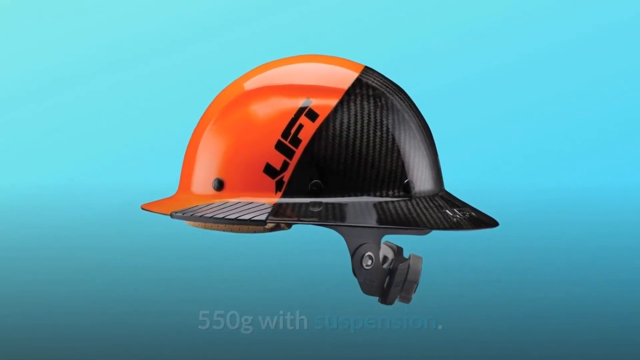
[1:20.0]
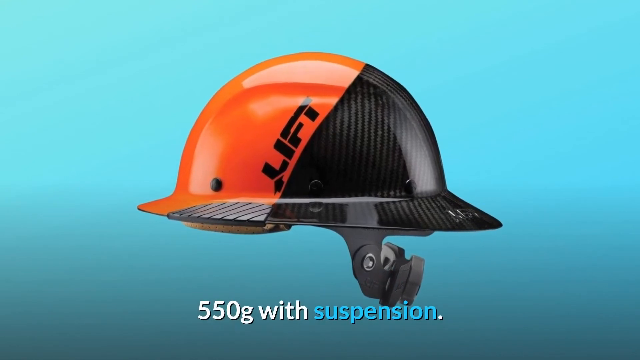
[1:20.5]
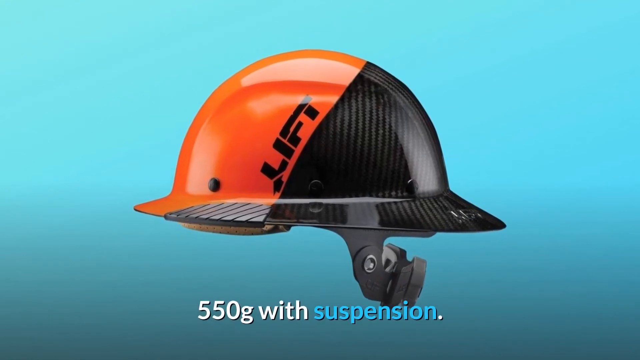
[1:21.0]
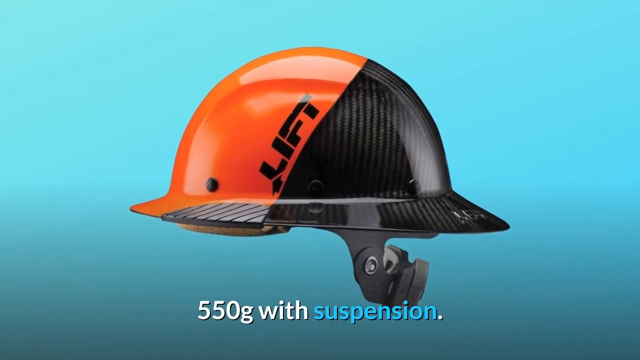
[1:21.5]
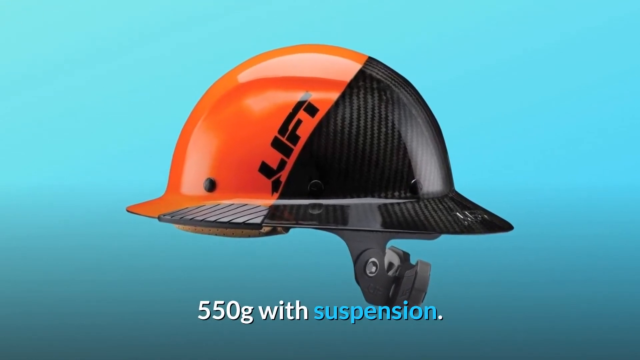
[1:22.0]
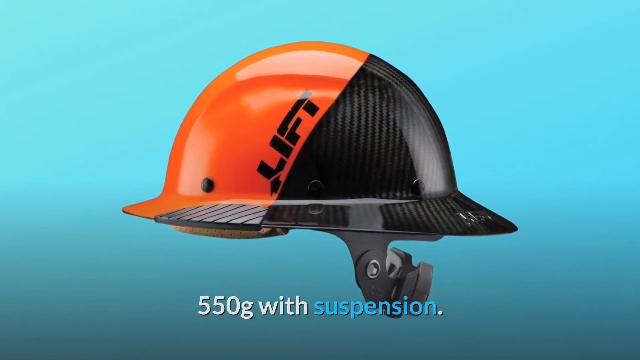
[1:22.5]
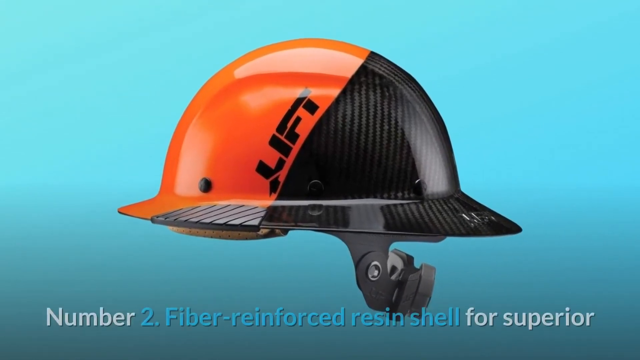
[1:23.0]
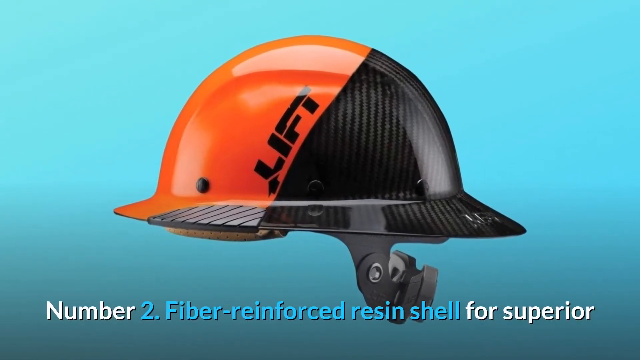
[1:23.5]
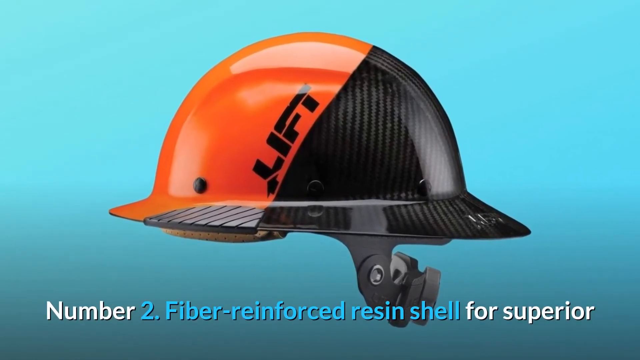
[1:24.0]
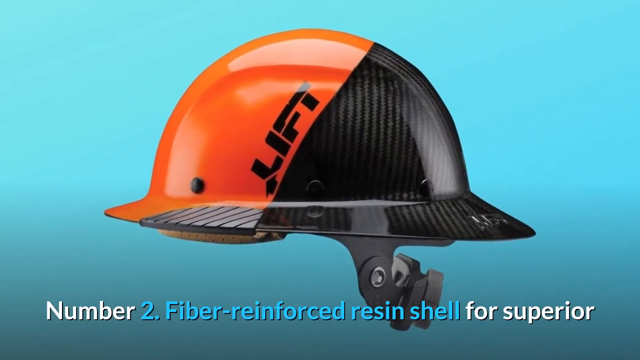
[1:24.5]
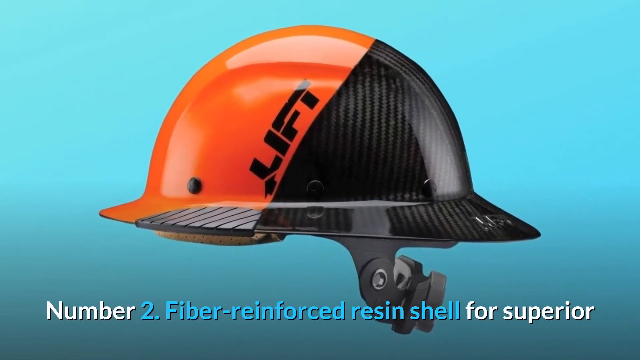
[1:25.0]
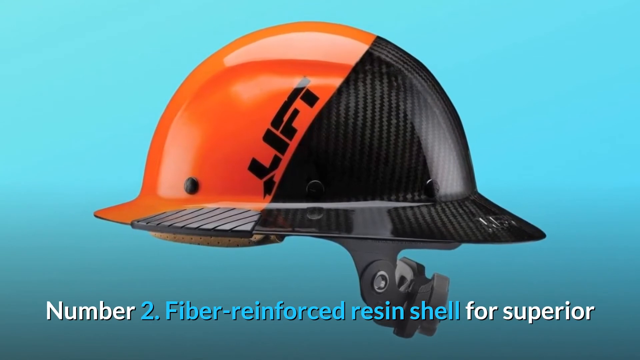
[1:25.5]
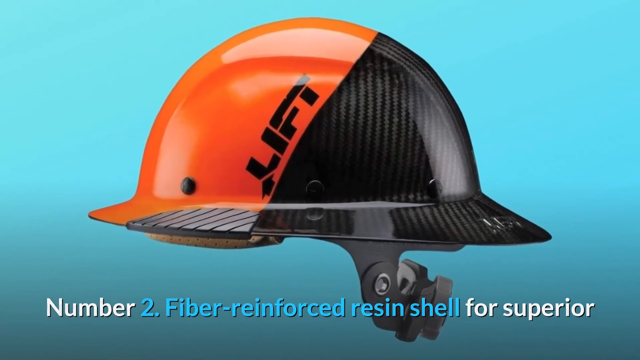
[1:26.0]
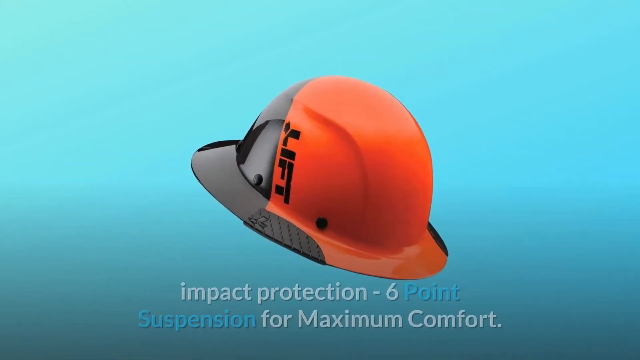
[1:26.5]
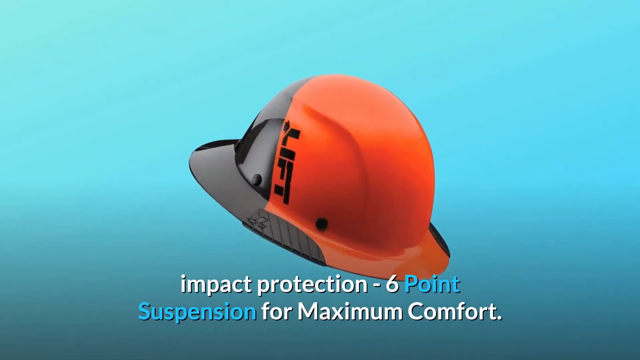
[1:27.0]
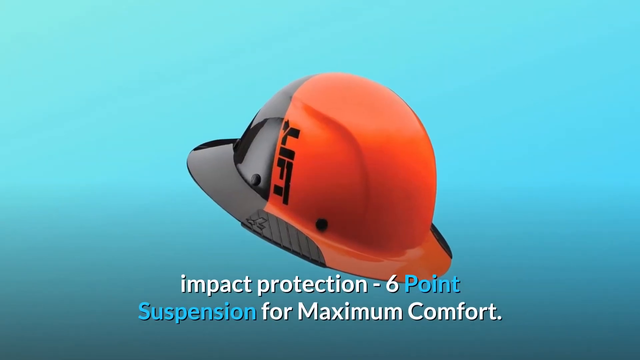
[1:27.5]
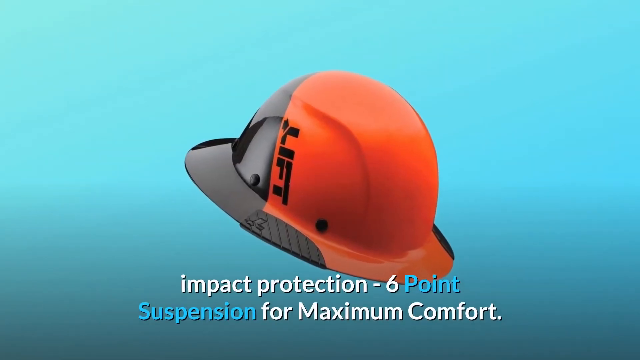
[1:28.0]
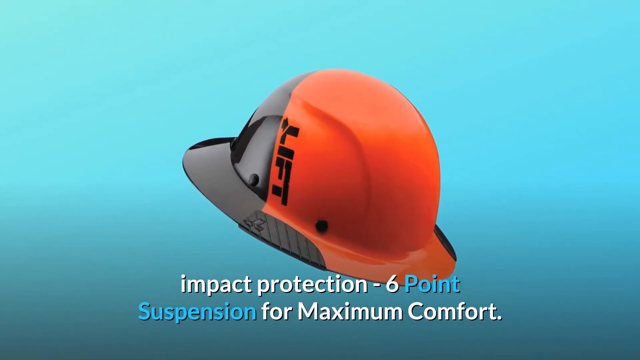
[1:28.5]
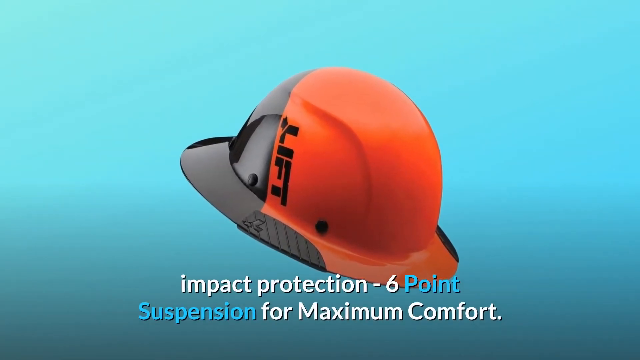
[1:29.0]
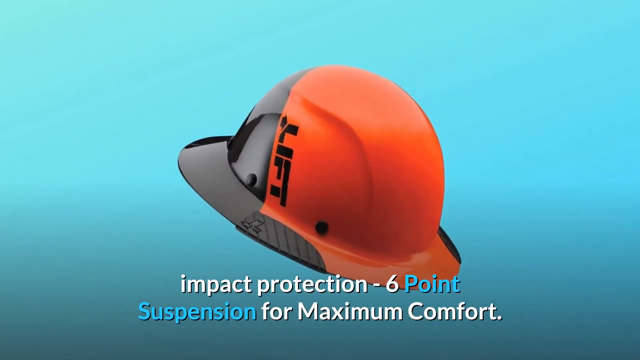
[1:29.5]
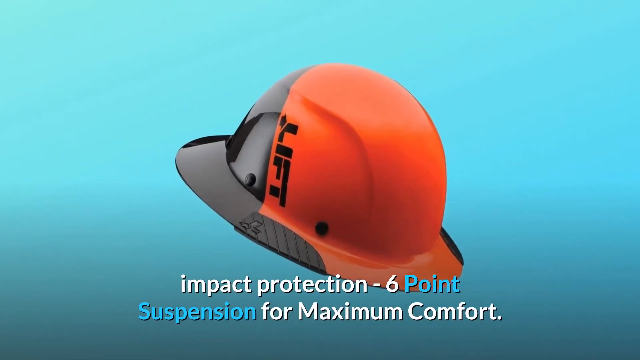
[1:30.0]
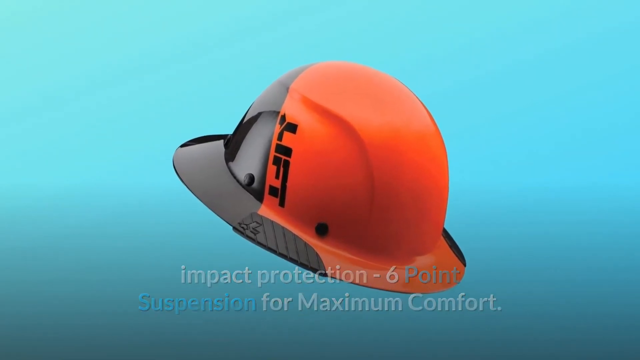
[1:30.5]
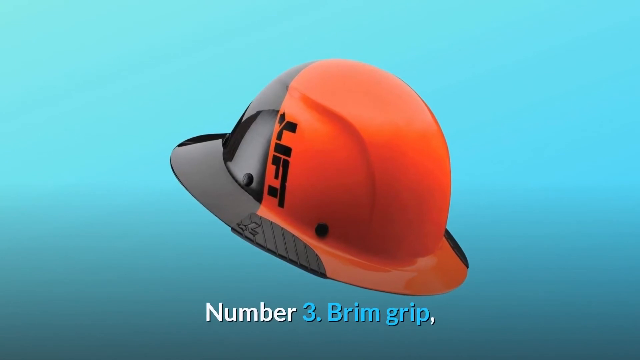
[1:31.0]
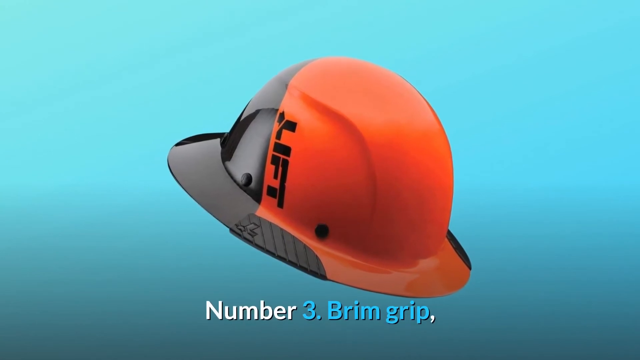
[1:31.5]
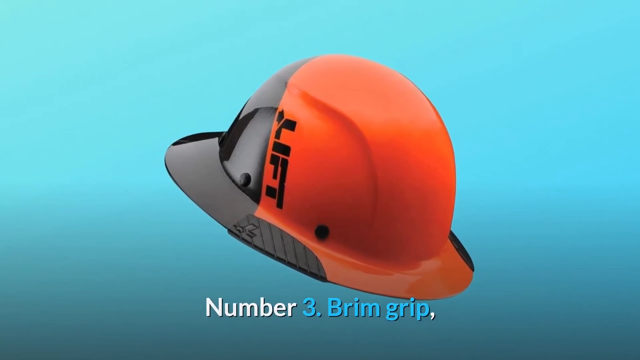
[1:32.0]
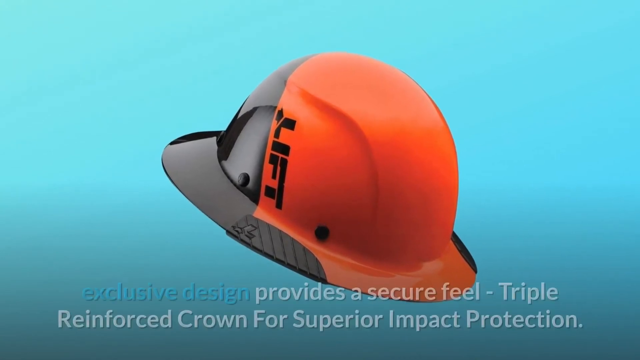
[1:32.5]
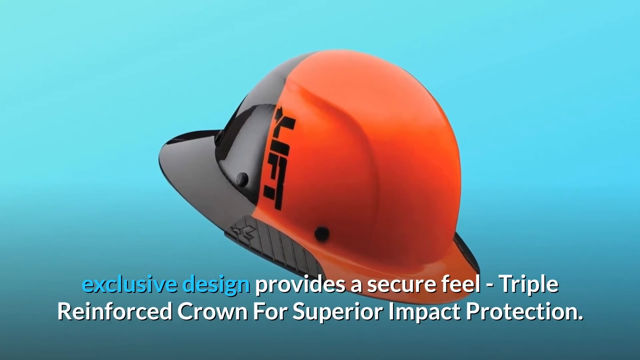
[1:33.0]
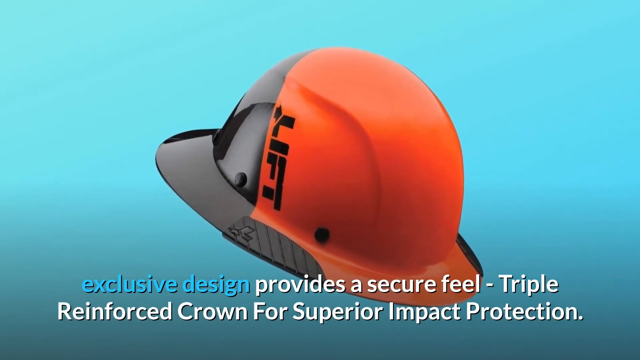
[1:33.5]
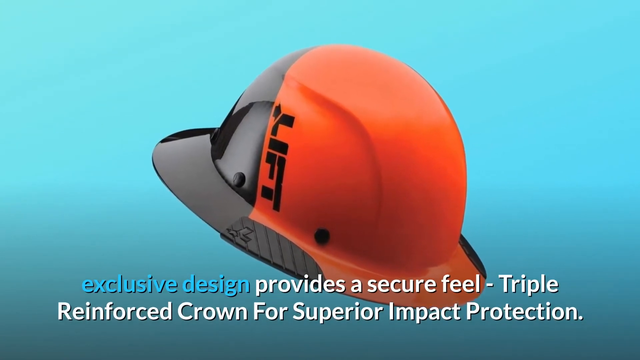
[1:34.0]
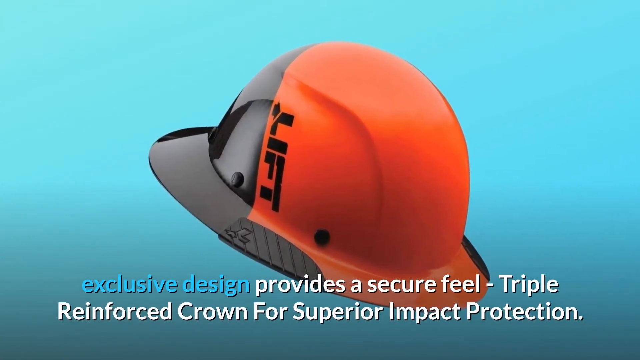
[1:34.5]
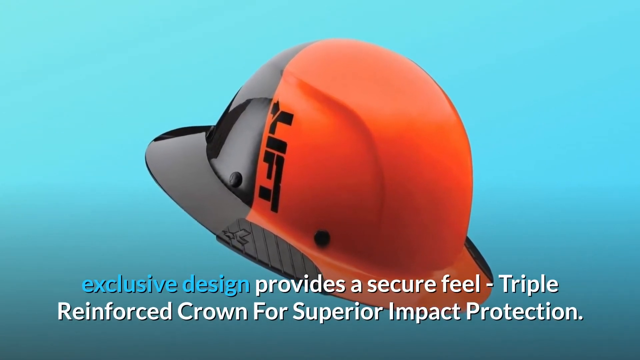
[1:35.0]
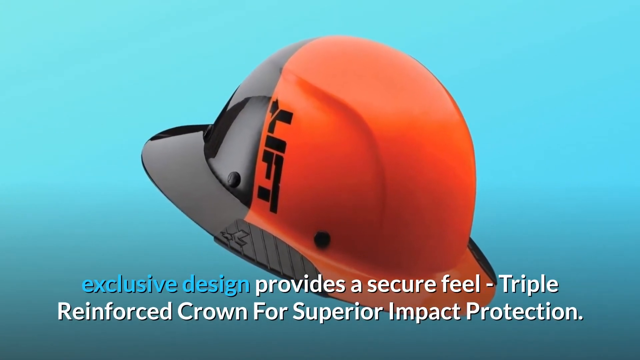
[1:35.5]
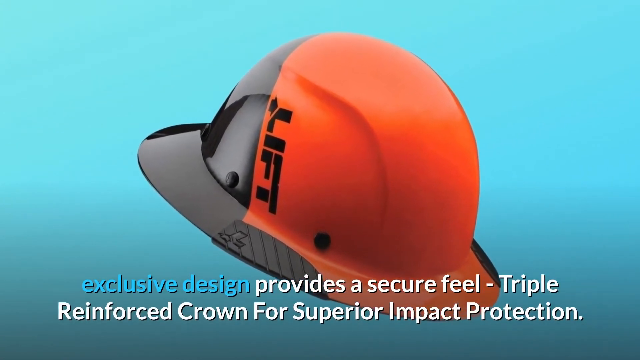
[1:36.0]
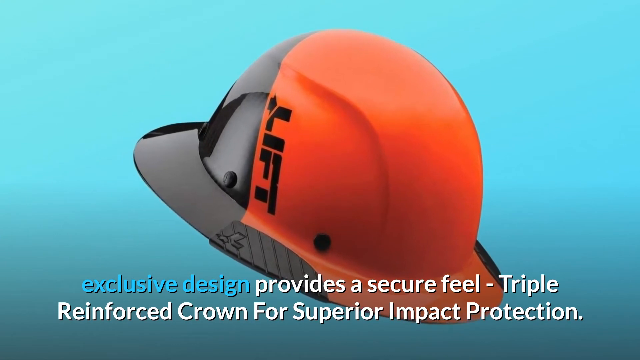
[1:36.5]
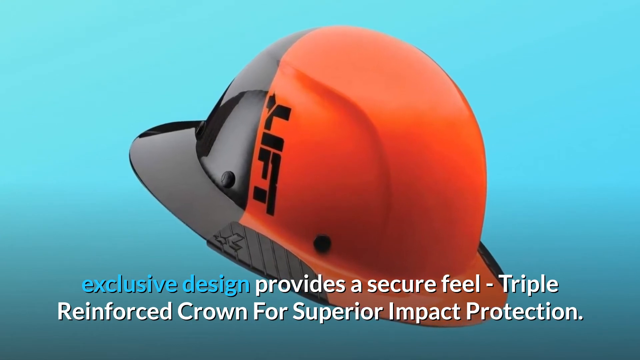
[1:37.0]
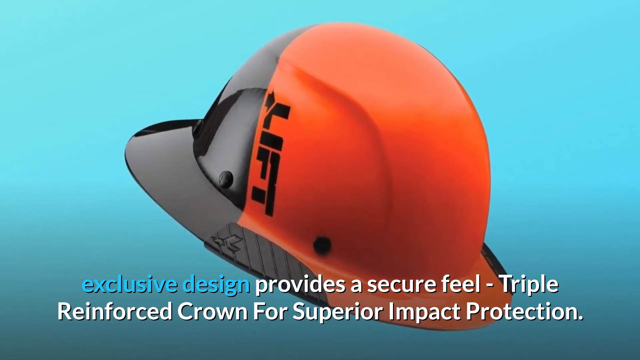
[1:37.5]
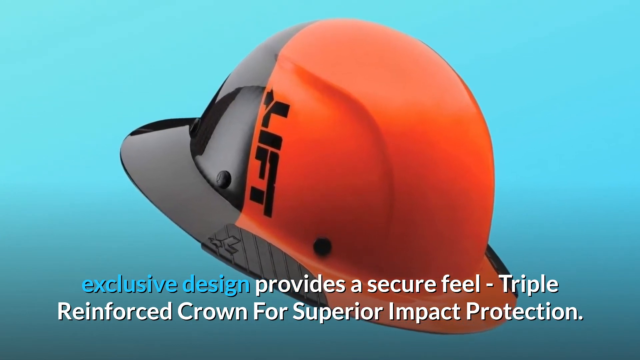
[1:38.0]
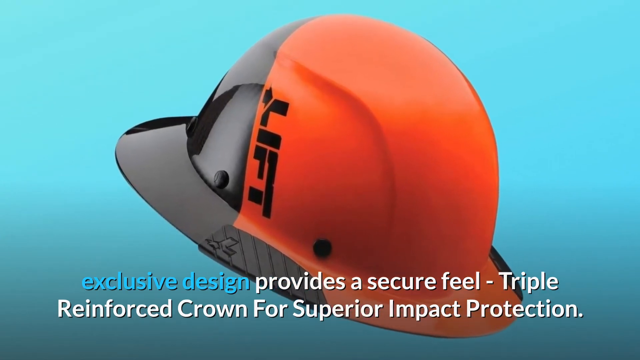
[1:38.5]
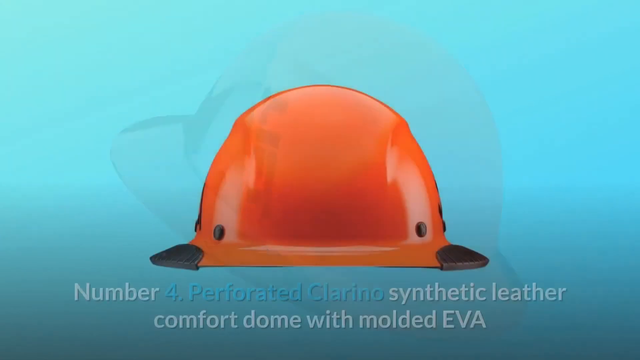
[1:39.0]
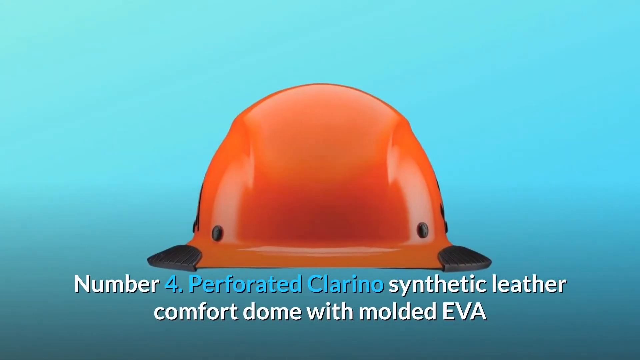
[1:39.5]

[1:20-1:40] The new caption on screen reads that the hat weighs 550 grams with suspension. Number 2 appears on screen, stating "fiber reinforced resin shell for superior impact protection, 6 point suspension for maximum comfort." Number 3 follows, stating "brim cap exclusive design provides a secure feel, triple reinforced crown for superior impact protection." Then number 4 appears, stating "the perforated Clarino synthetic leather comfort dome with molded EVA." The video again shows the different hats on a light blue background, and words in the captions, such as "suspension" and "fiber reinforced resin shell," are highlighted in light blue. On the black side of the hard hat, the carbon fiber pattern and black carbon fiber material are visible. The hat does not seem to come in any colors other than orange and black.